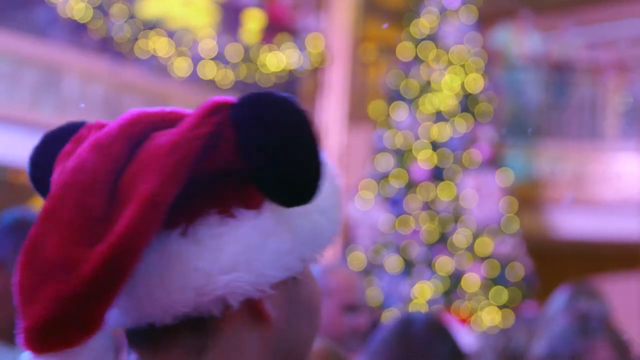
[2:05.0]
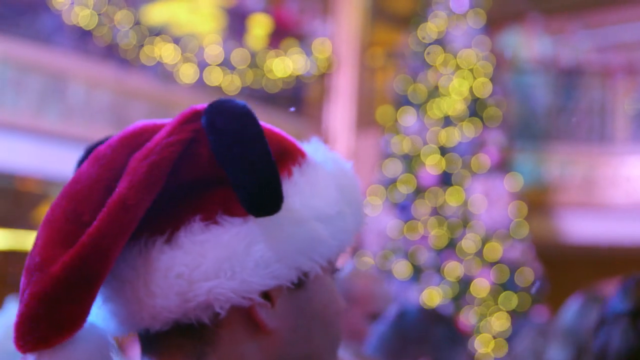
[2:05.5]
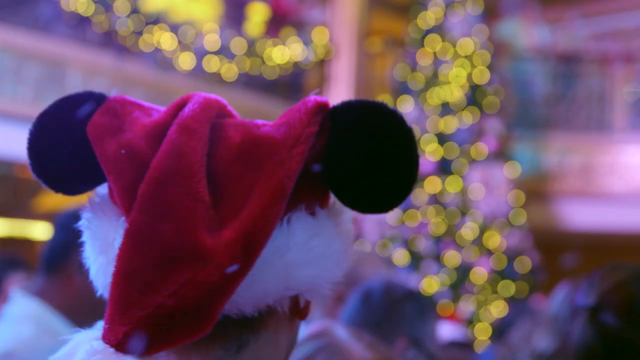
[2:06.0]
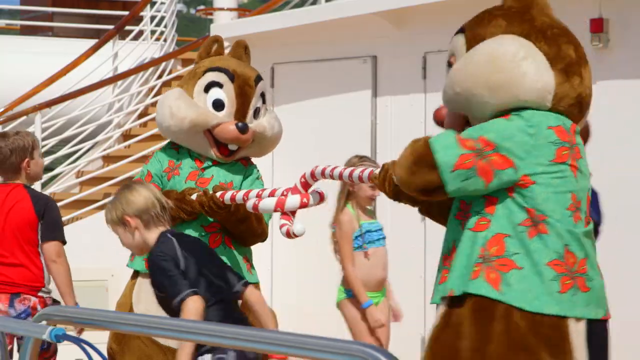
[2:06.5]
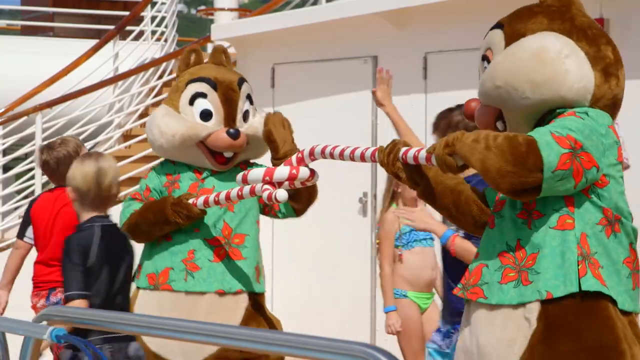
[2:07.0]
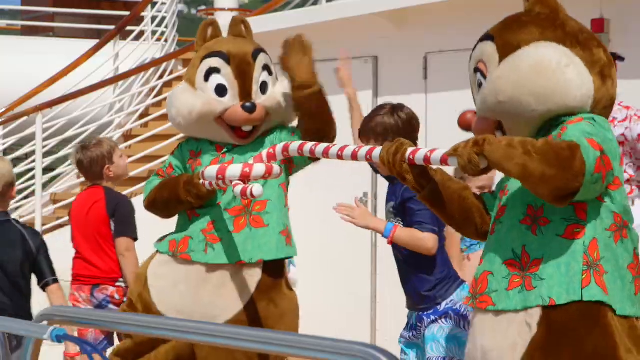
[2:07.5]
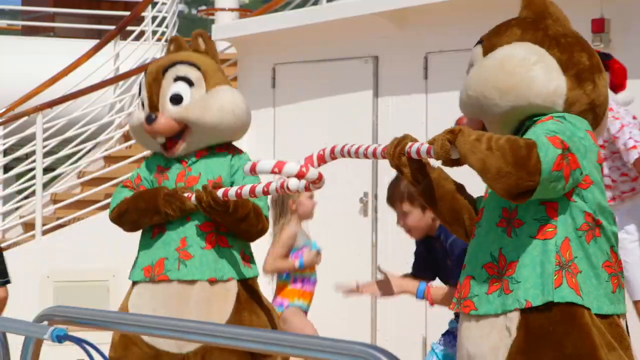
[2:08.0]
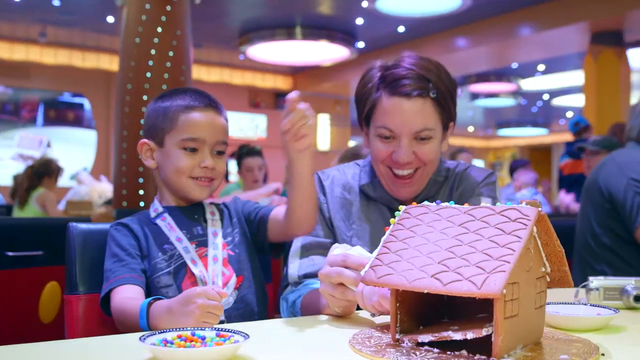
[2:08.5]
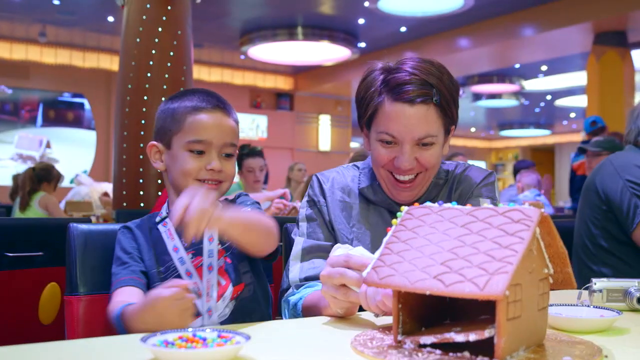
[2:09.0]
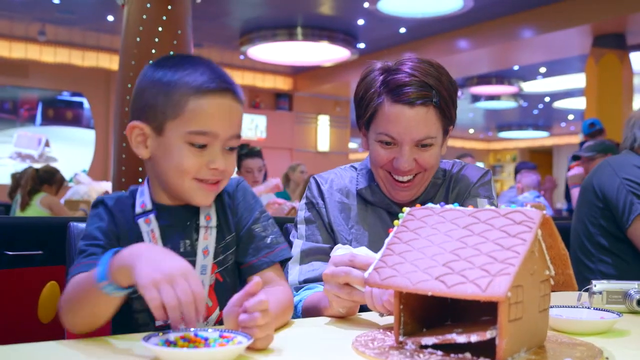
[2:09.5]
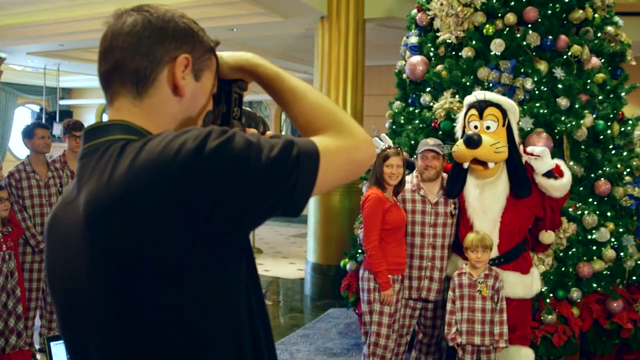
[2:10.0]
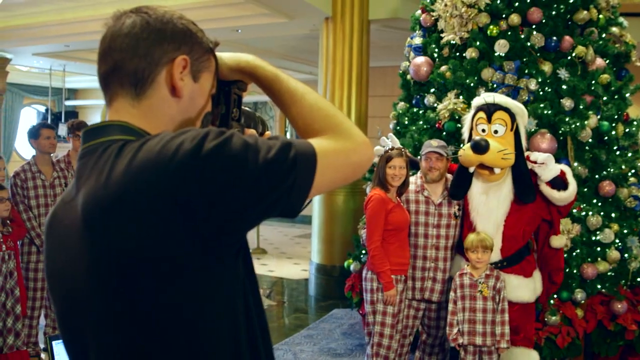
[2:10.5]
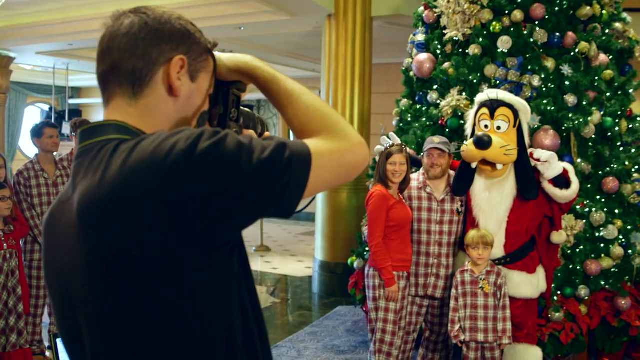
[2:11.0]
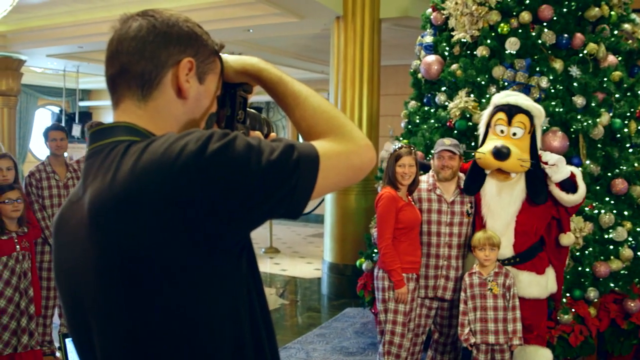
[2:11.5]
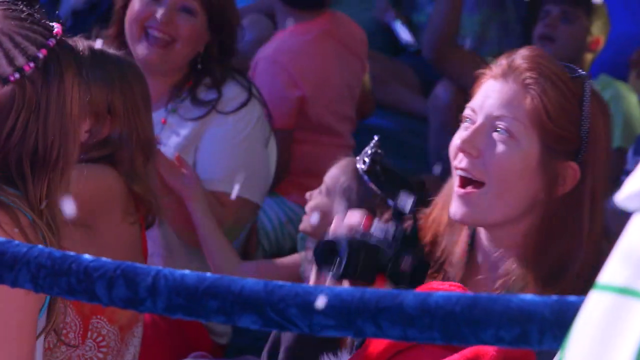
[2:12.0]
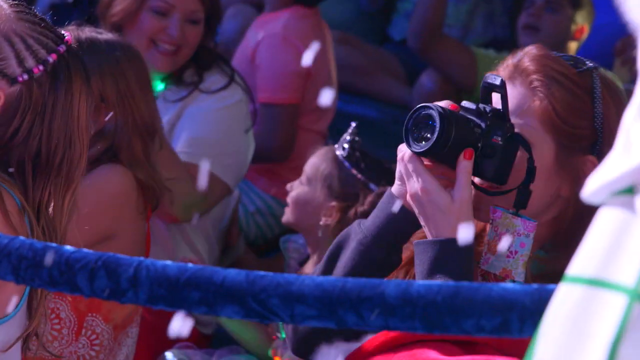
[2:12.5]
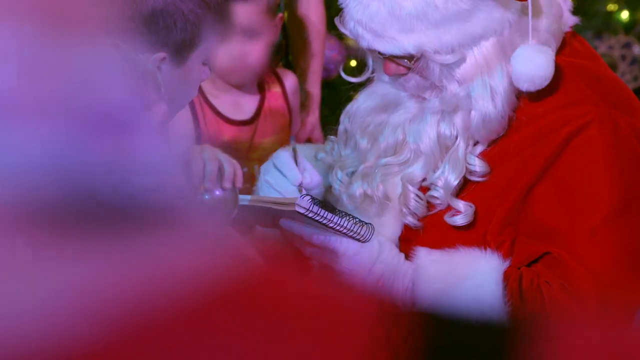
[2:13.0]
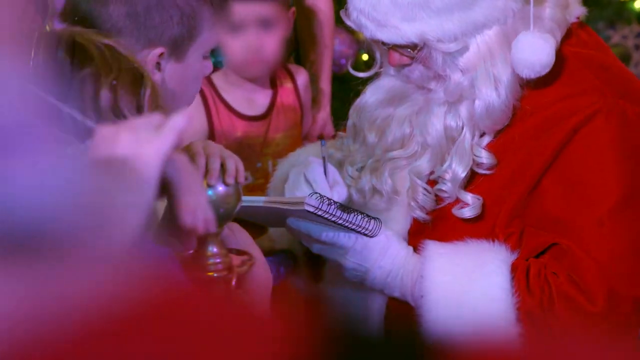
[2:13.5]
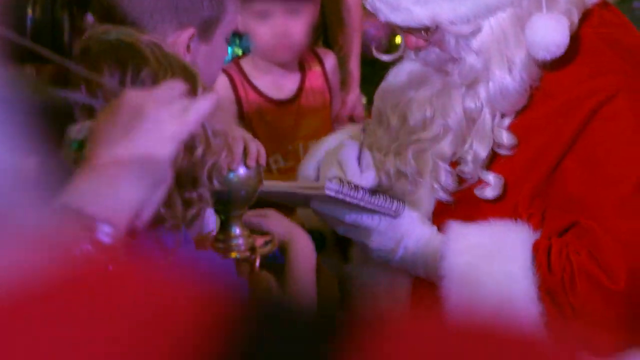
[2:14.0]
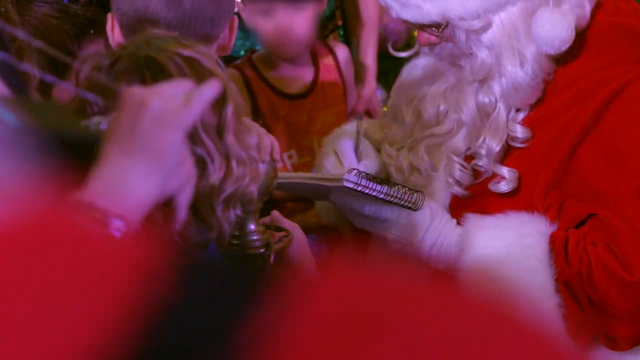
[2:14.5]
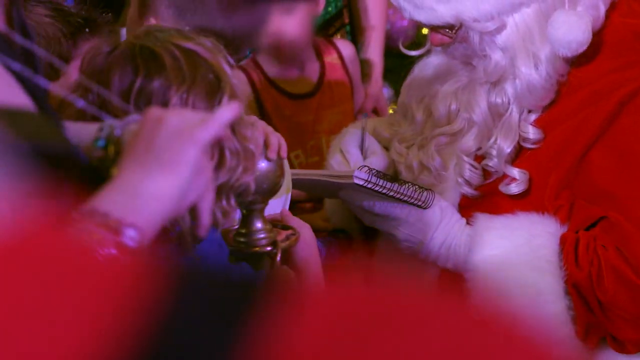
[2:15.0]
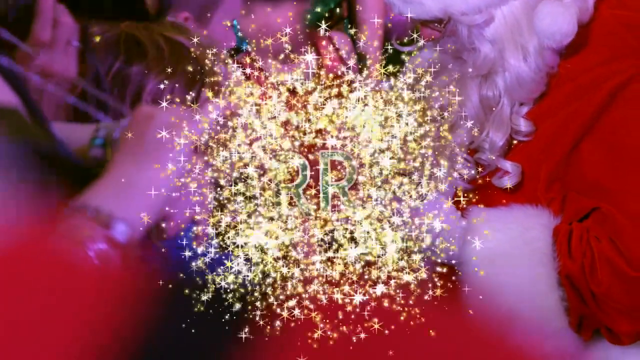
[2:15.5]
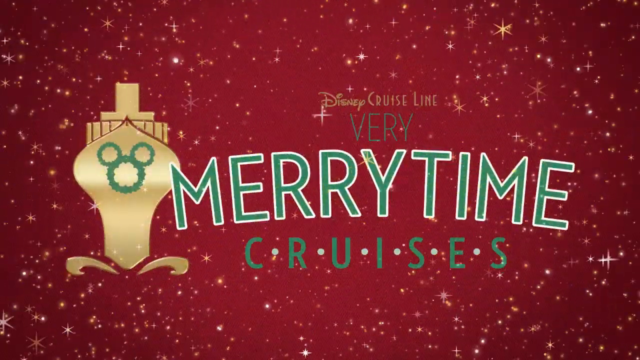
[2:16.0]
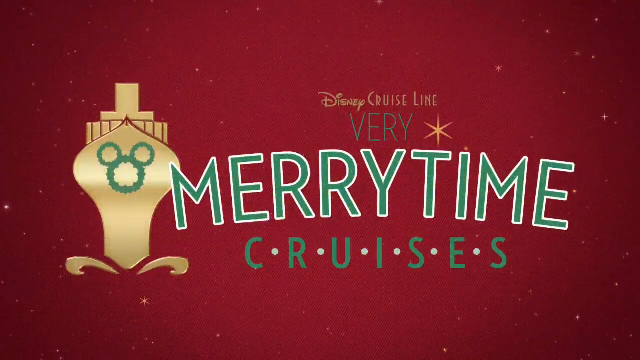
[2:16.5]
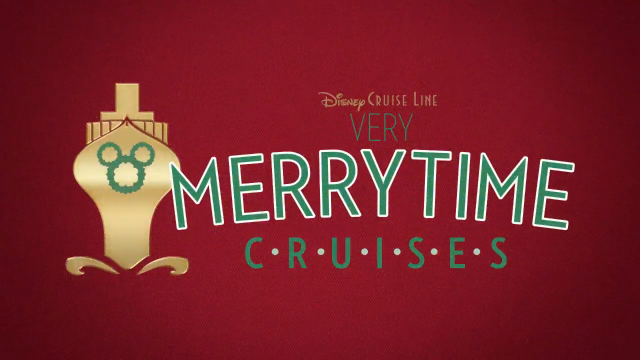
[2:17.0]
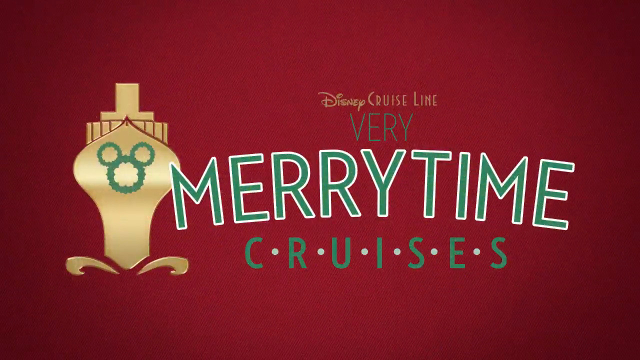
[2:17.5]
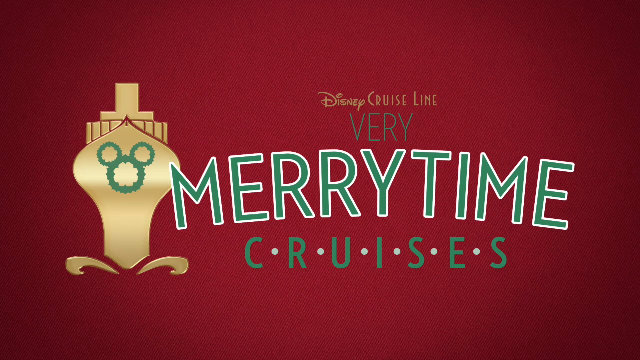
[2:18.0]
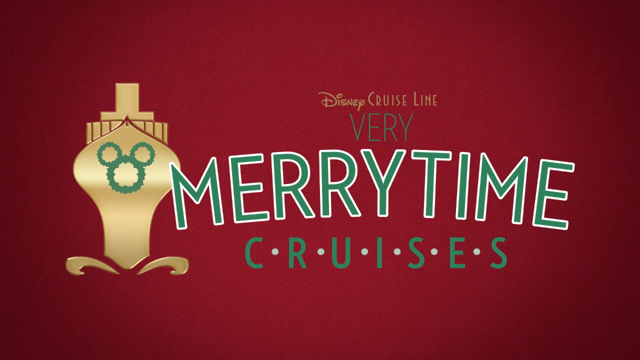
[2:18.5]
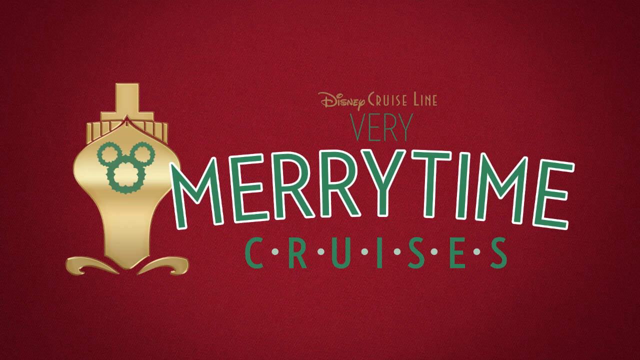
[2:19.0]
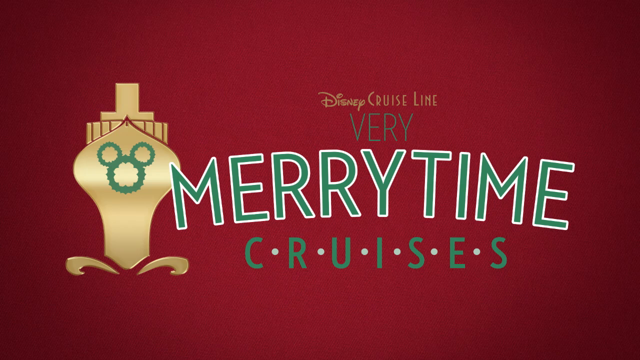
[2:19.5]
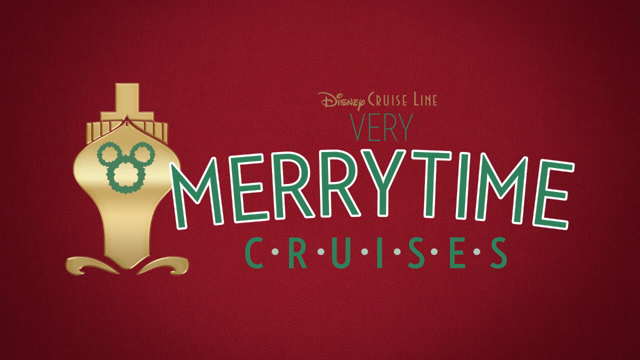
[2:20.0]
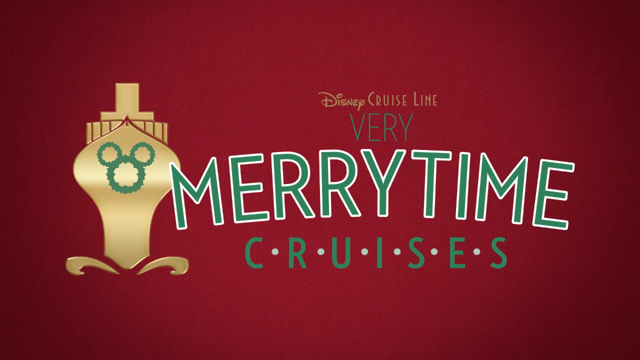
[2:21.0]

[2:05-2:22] The back of a child's head is shown wearing a Mickey Santa hat, a Santa hat with Mickey ears; the background is blurred but the twinkling lights of the Christmas tree are visible. On the deck, children in bathing suits walk around while Chip and Dale, wearing green shirts with red poinsettias, fight with candy canes. A mom and her son put together a gingerbread house and add candy to it. More families, all in pajamas, have pictures taken by a photographer with Pluto, or possibly Goofy, in front of the Christmas tree. Short clips follow of snow coming down, happy kids' faces, and Santa writing something in an autograph book for a child. The final slide says "Disney Cruise Line, very merry time cruises" on a red background, with the words "merry time" written in green with a white border. On the left-hand side is an image of a cruise ship in gold with a green Mickey head on it.